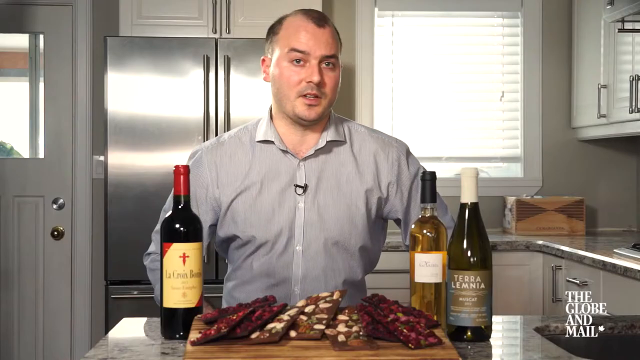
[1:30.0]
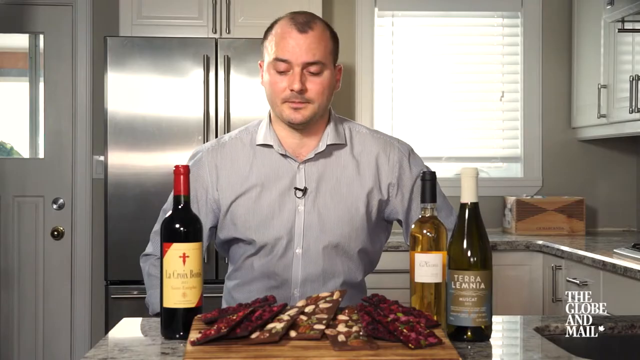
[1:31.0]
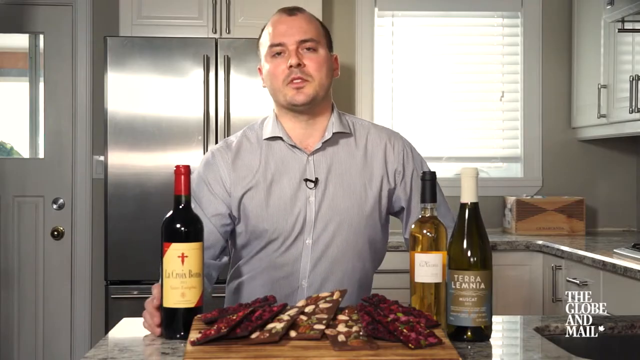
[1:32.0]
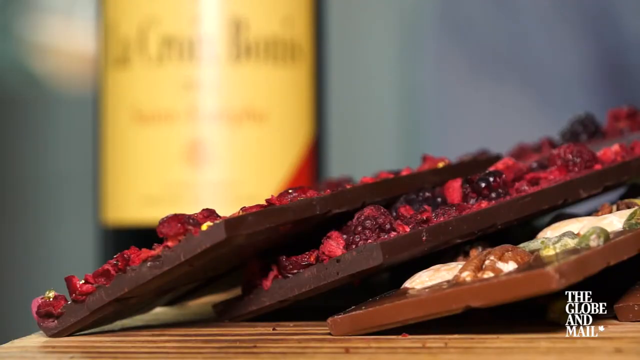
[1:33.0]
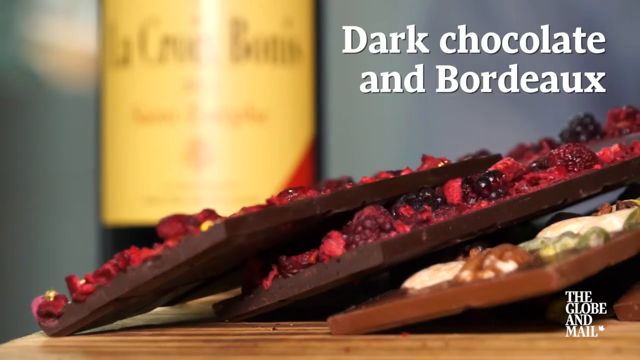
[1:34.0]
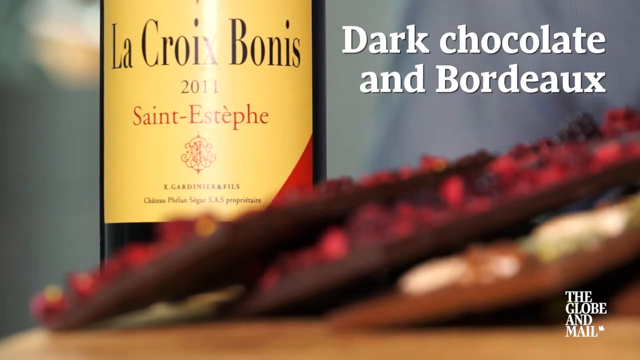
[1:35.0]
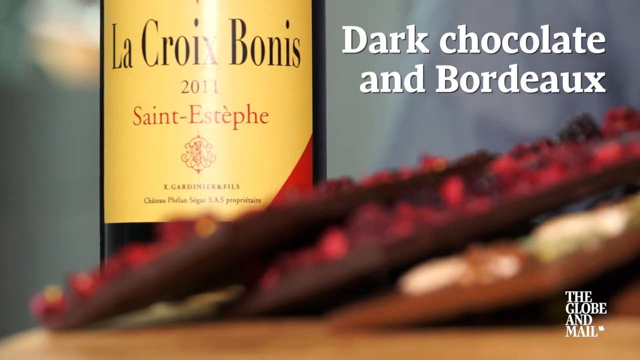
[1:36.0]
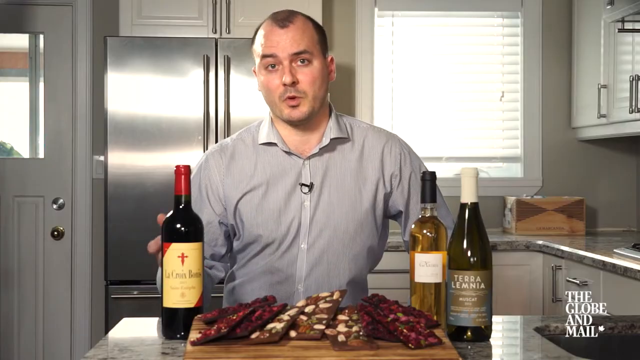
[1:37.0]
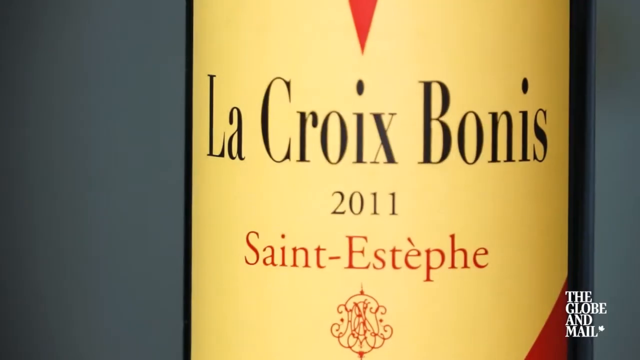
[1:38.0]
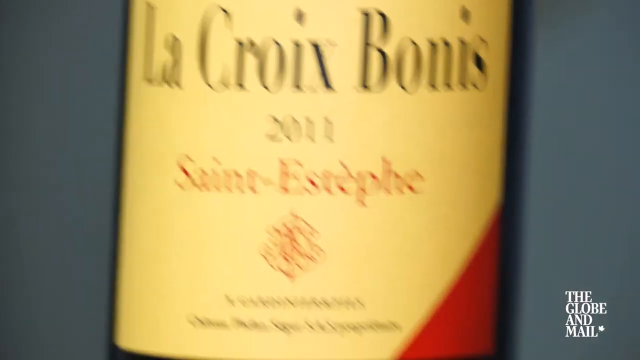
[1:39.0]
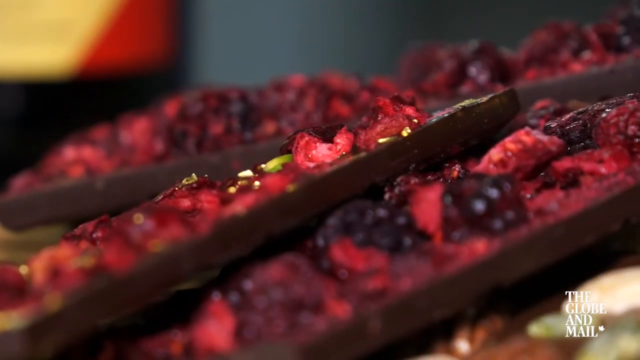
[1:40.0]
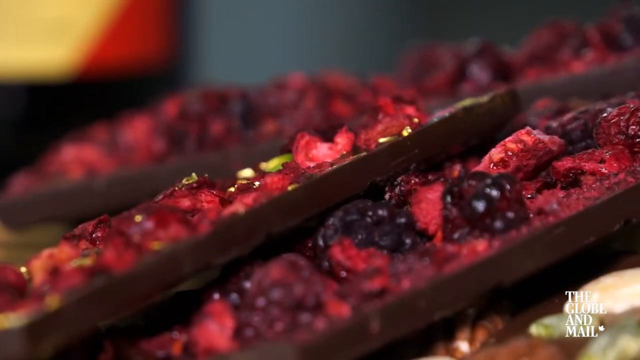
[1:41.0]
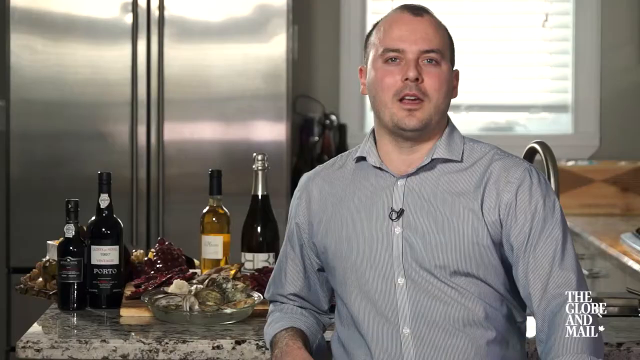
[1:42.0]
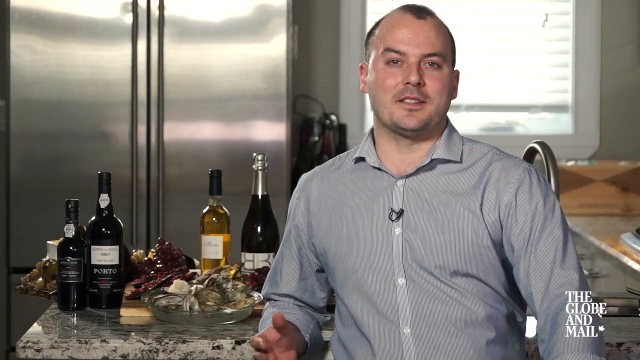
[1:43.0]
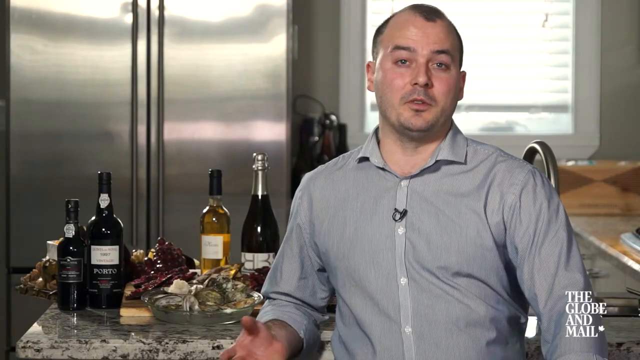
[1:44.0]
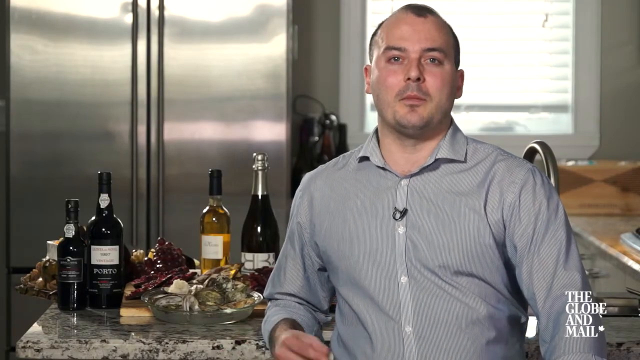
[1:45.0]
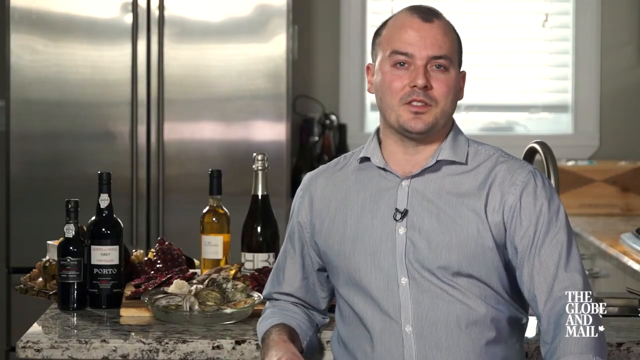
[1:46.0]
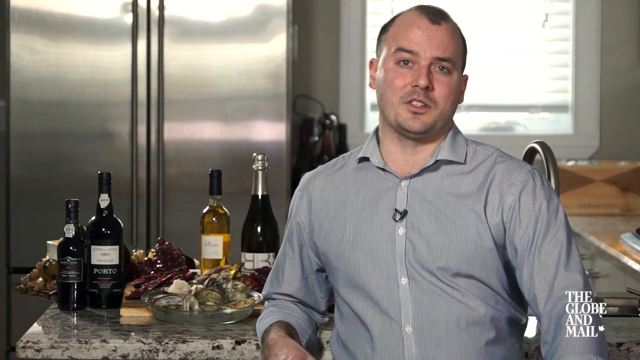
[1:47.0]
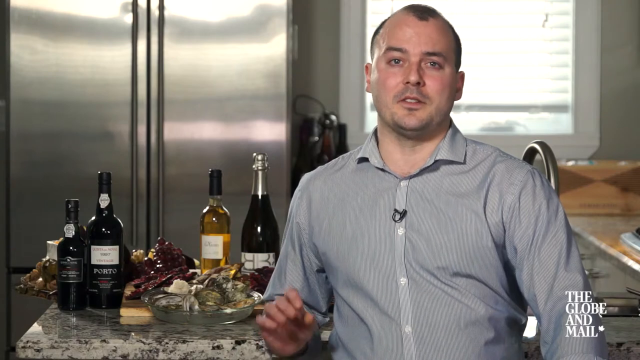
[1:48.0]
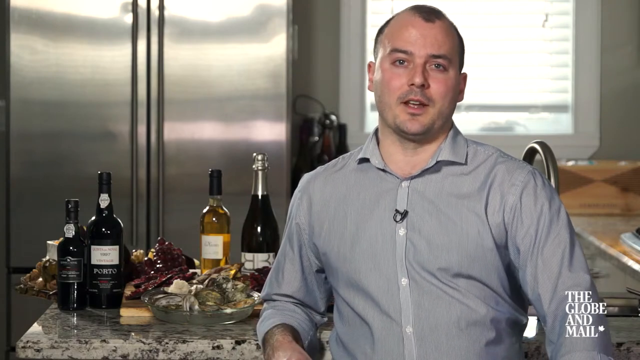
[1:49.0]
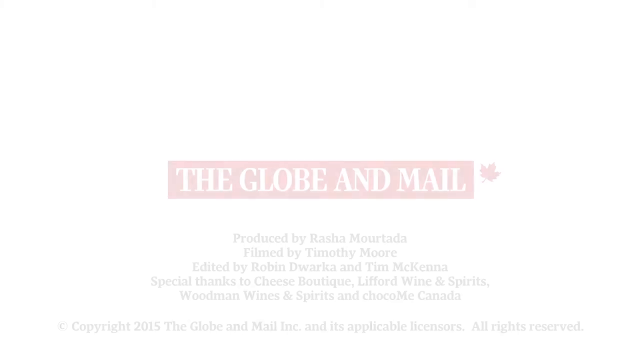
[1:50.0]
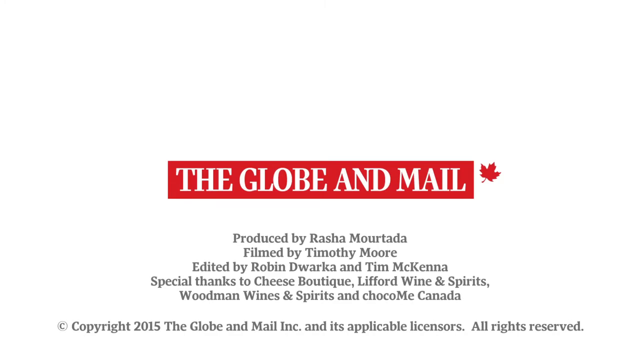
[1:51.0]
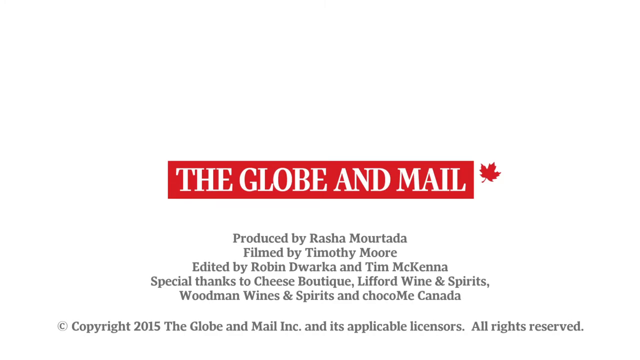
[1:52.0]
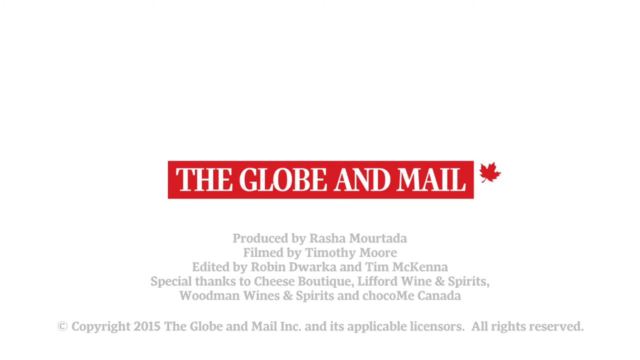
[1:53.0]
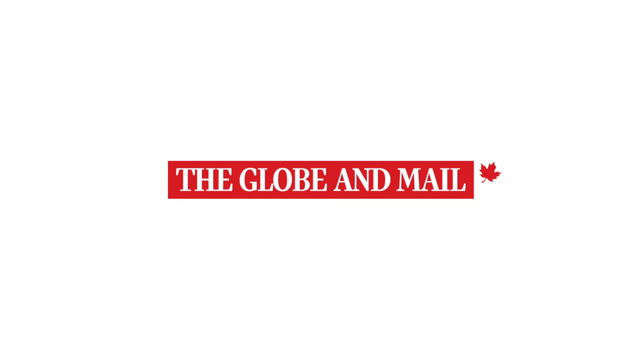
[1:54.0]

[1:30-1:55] He stands with two bottles on one side on the kitchen slab and one bottle on the other side, also on the kitchen slab. He grabs the lone bottle as the camera zooms to its label: the wine is Lacroix Bonis, a 2011 wine, with Saint-Estephe on it, and the label has a yellow and red background. At the top right of the screen, white text reads "dark chocolate and Bordeaux," with the strawberry chocolates in the background. Will moves one hand while the other rests on the kitchen slab. The image zooms into the wine and the chocolates. Will is right in front of the kitchen slab with four wines on the table, and a faucet is behind him; he leans his elbow on the kitchen slab. The video transitions to text reading "Globe and Mail" in white on a red background with a red maple leaf beside it, and the production credits at the bottom: "Produced by Russia Motadi," "Filmed by Timothy Moore," "Edited by Robin Dwarka and Tim McKinnon."